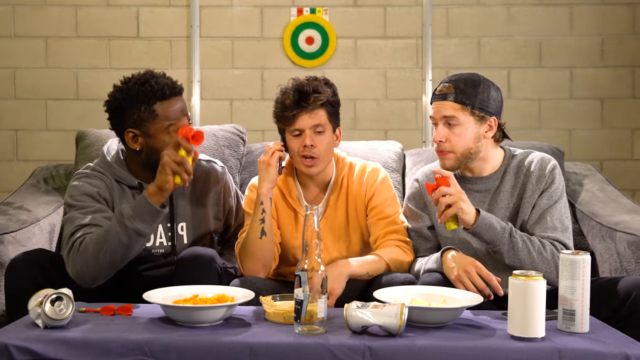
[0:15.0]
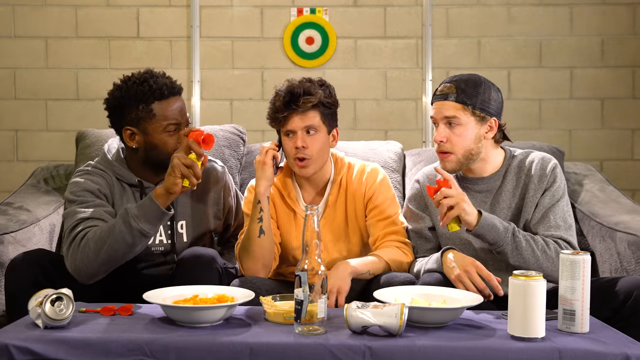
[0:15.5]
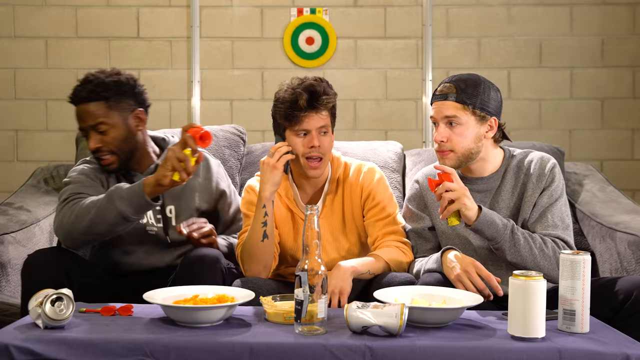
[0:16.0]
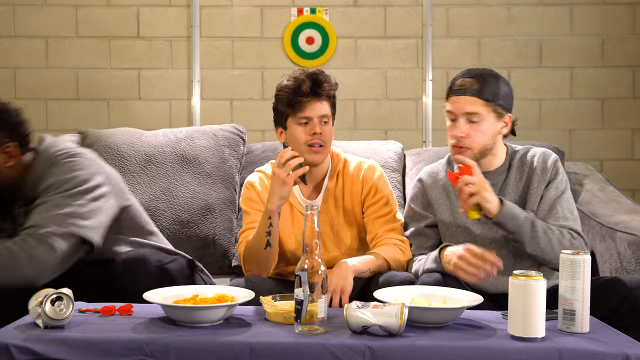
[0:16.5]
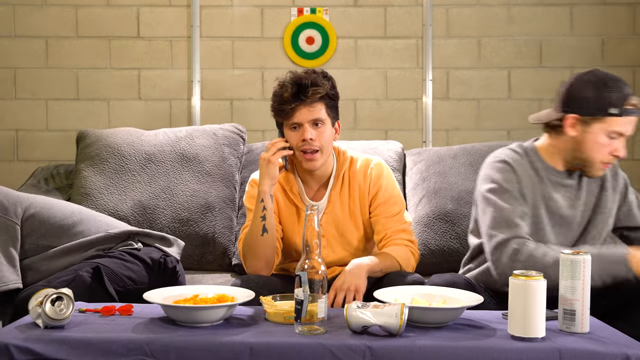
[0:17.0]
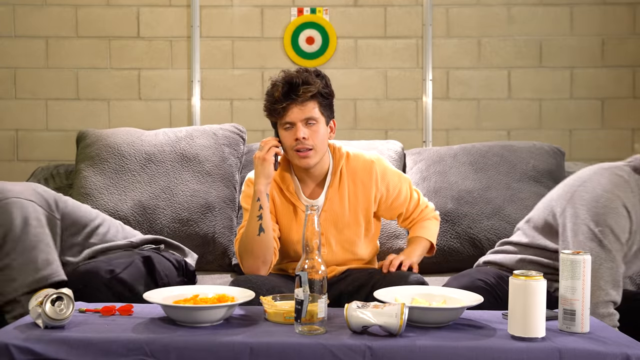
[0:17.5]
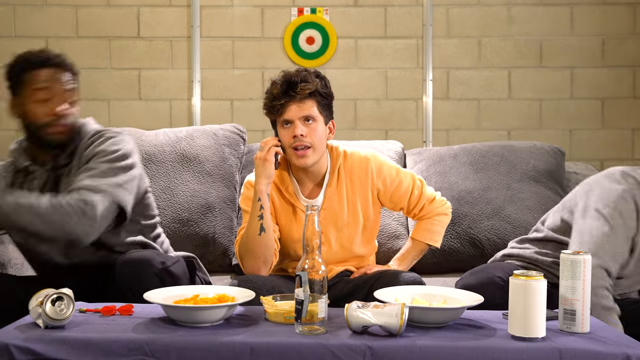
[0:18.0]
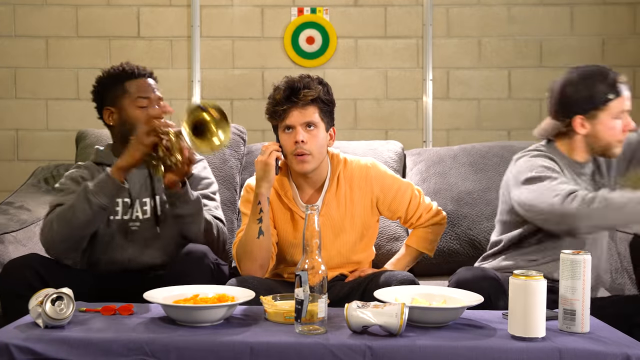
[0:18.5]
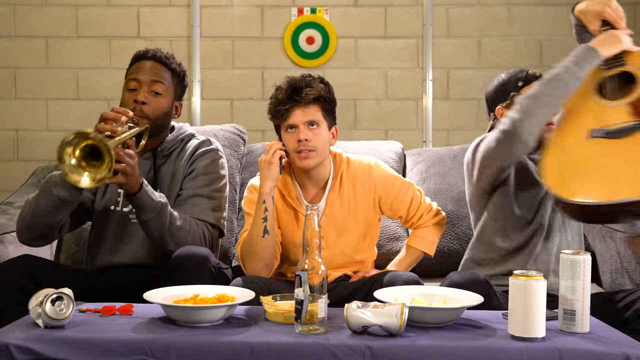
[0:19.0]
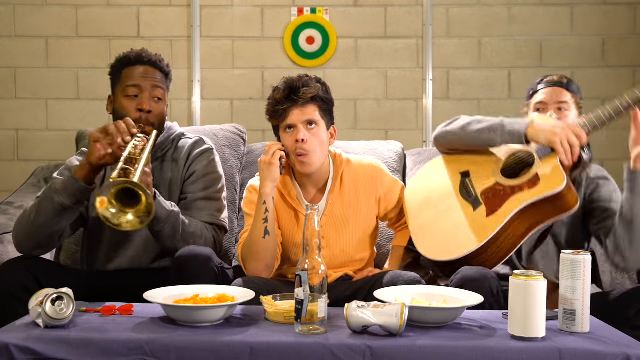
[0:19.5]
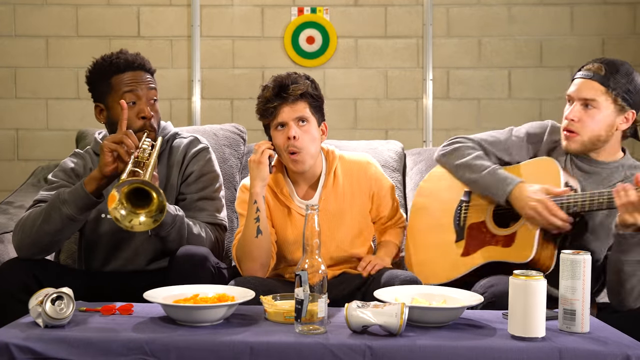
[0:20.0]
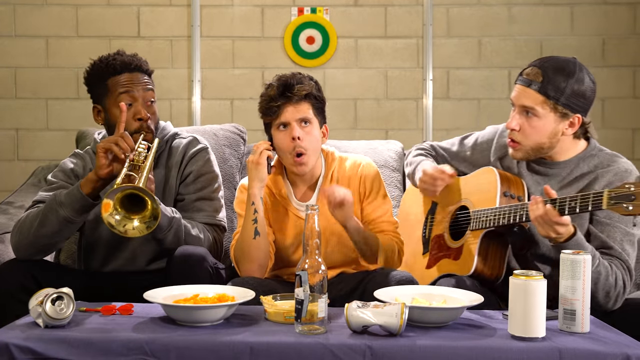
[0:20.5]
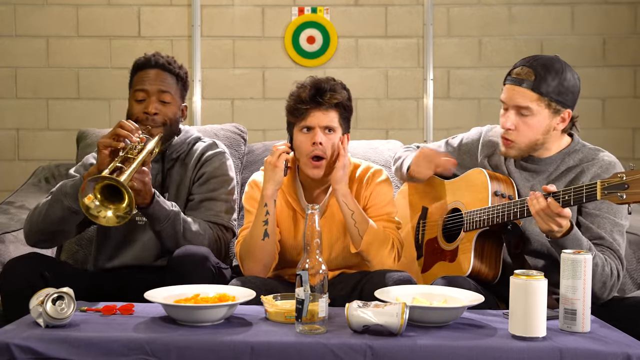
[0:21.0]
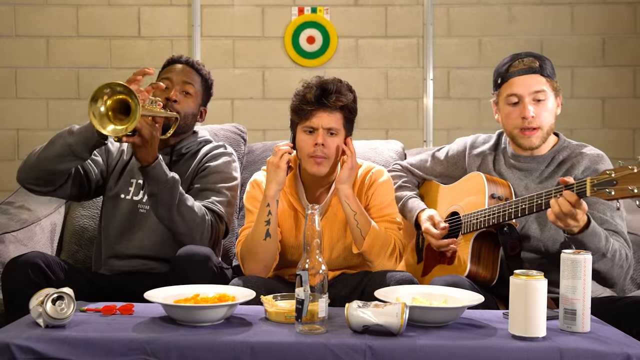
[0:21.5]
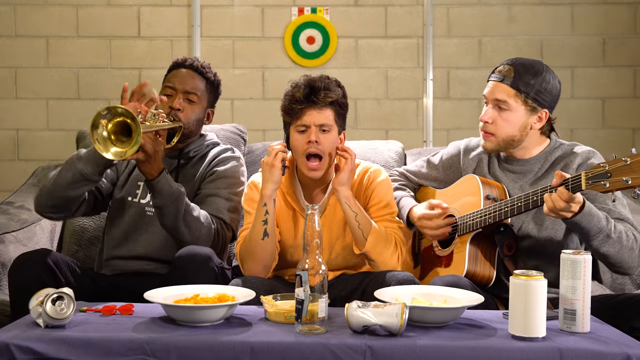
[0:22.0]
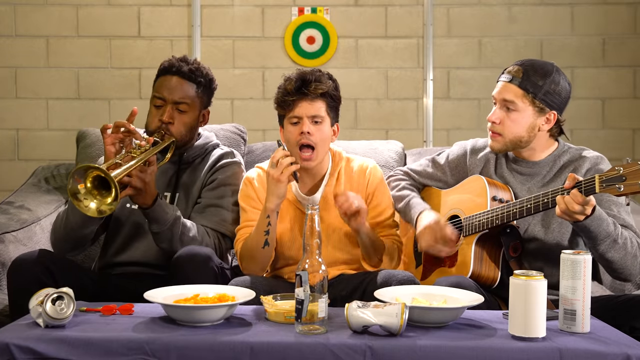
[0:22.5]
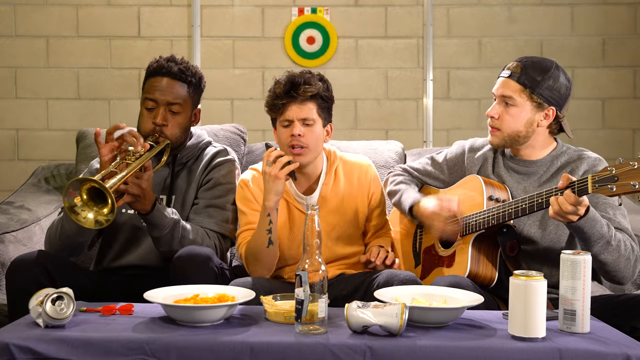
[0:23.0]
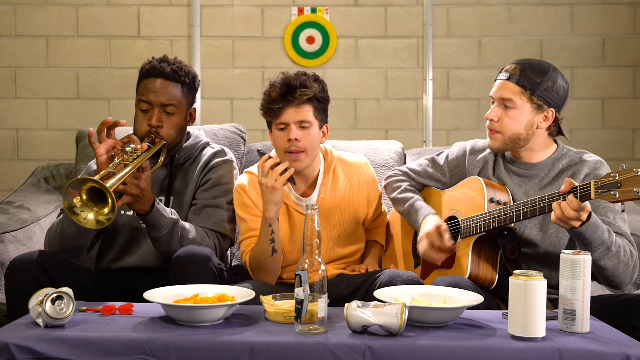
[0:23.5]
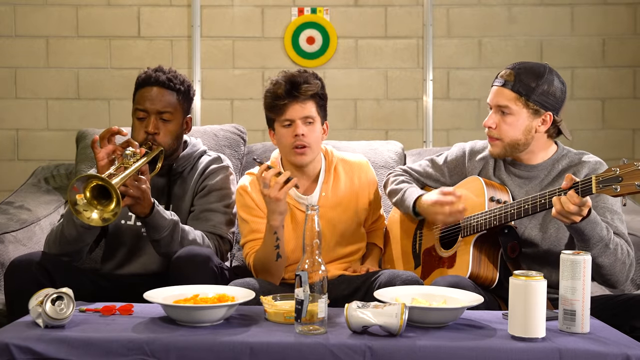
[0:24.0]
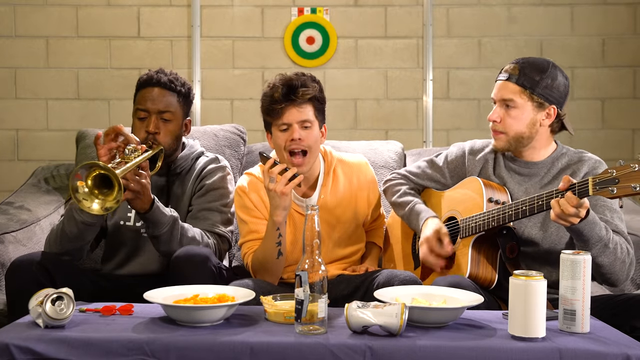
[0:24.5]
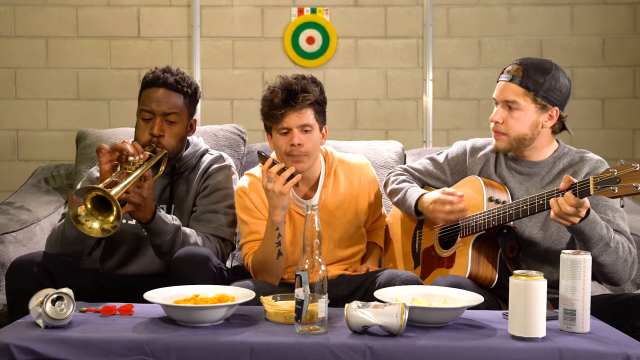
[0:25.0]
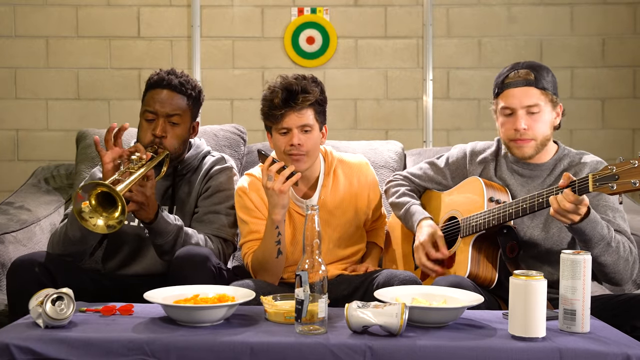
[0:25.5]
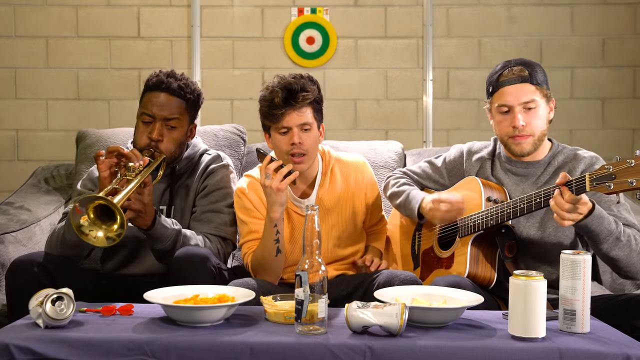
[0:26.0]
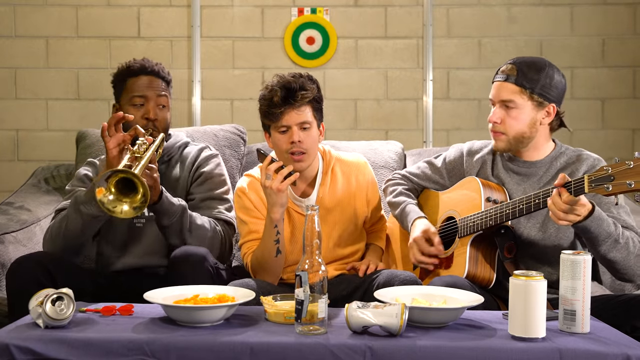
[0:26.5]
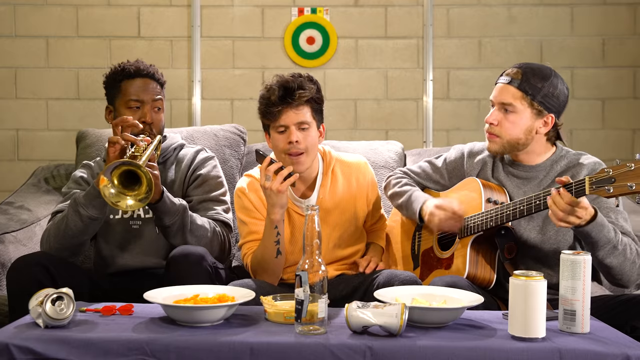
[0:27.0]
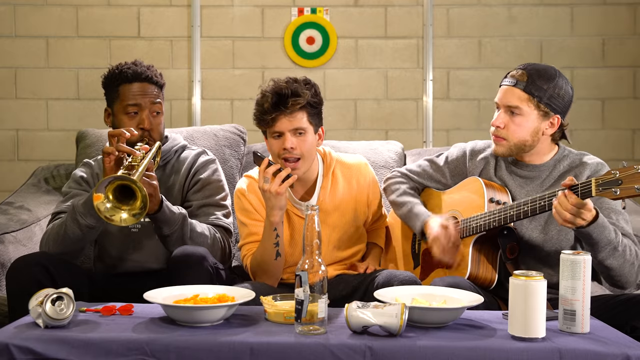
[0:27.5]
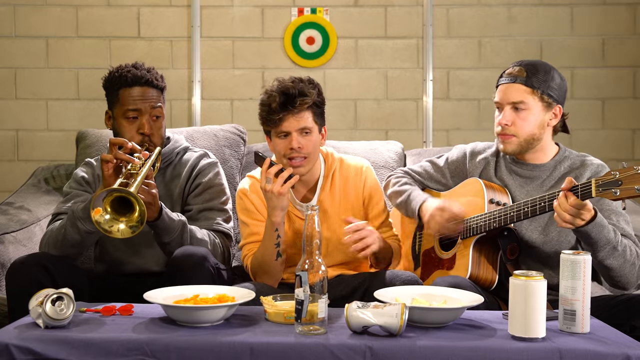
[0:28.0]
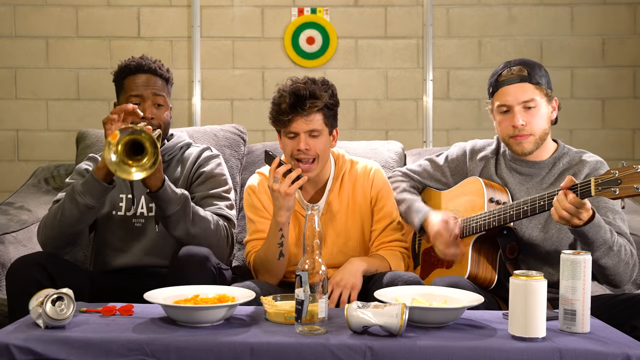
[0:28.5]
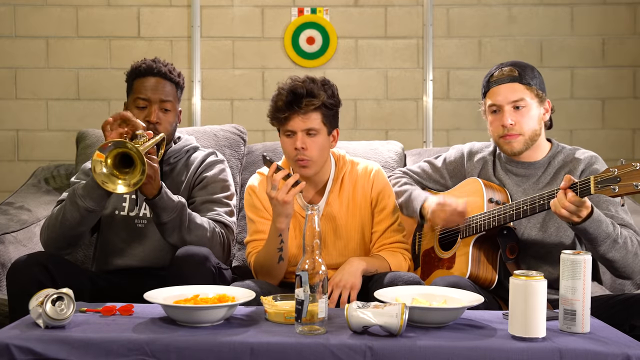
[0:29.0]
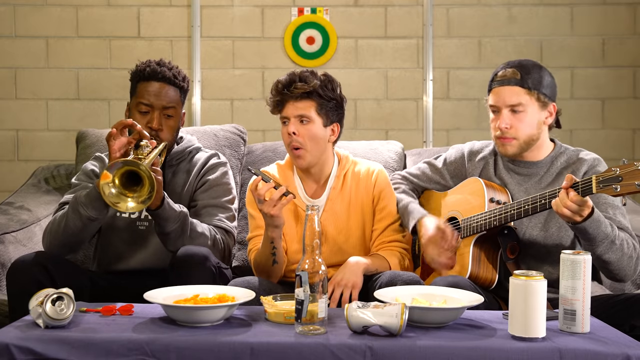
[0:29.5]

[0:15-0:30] The same angle and setting show the three men sitting on the couch. The man in the middle, wearing an orange shirt, talks on a cell phone. The two men who had the red air horns both lean over at the same time to set them down, and while the man in the middle talks, they lean over to pick up different instruments and start playing them at the same time. The man on the right with the backwards hat plays a bass guitar, and the man on the left plays a trumpet of some sort. The man in the middle sort of looks at both of them but keeps talking on the phone as if nothing is happening. Their expressions are relatively neutral; they don't look particularly happy and look sort of serious as they play.